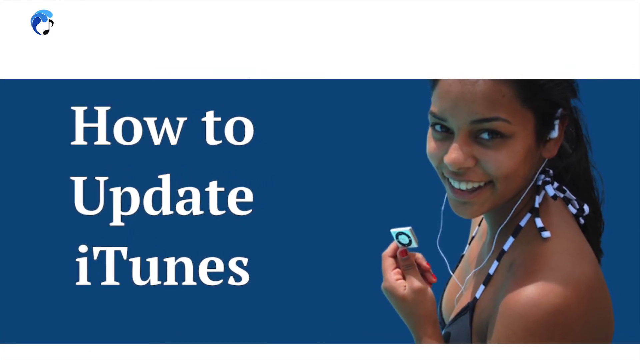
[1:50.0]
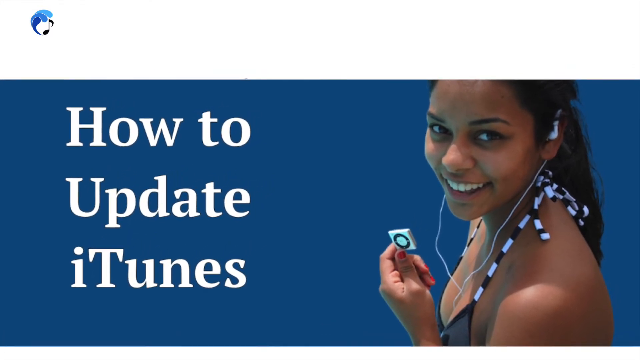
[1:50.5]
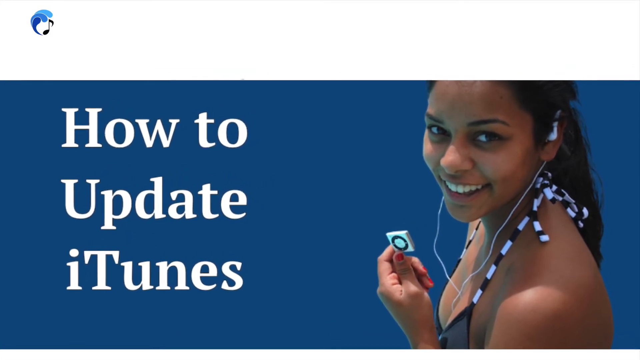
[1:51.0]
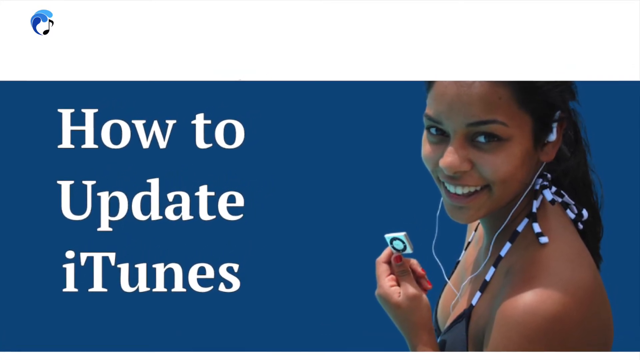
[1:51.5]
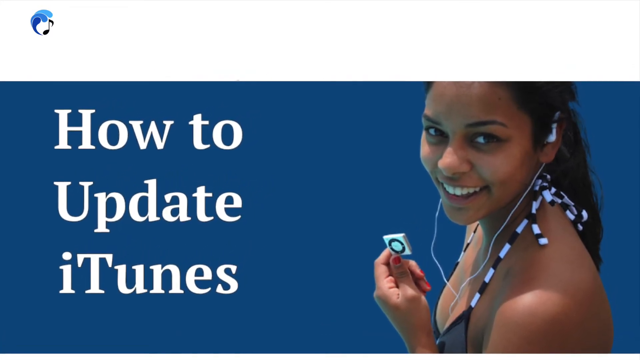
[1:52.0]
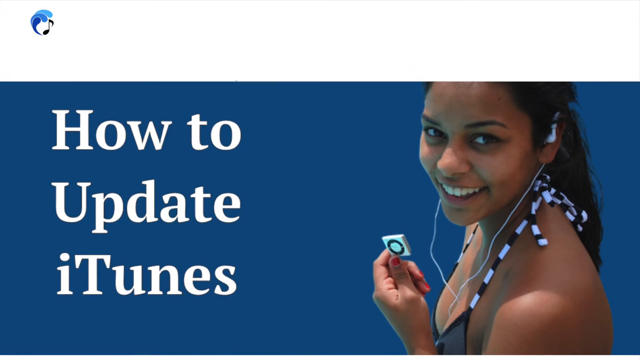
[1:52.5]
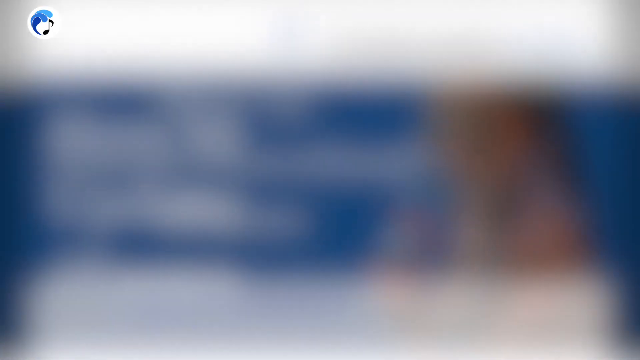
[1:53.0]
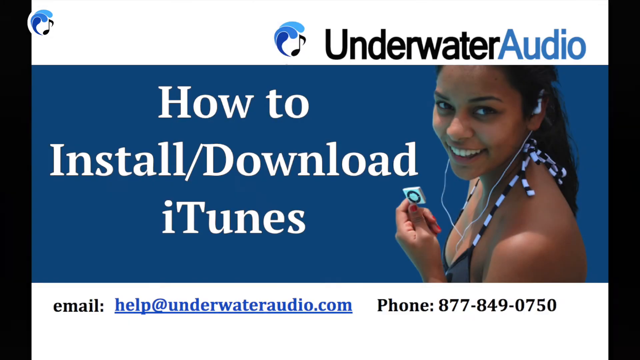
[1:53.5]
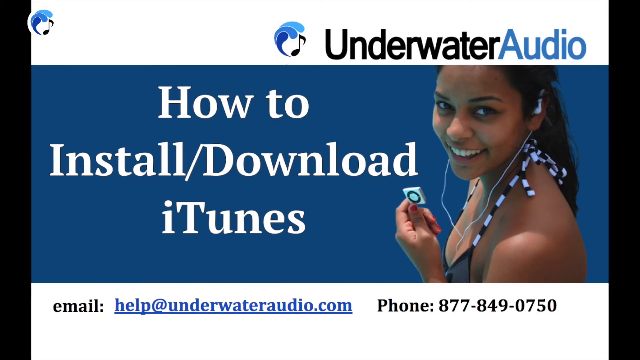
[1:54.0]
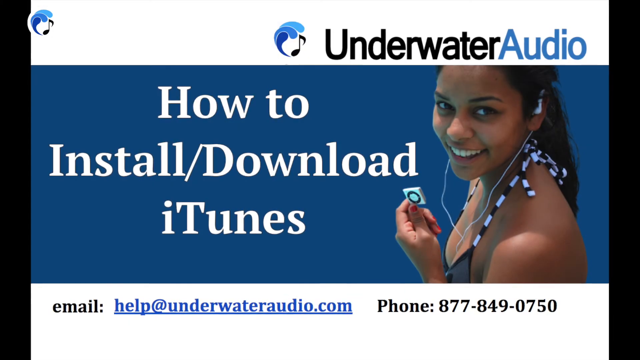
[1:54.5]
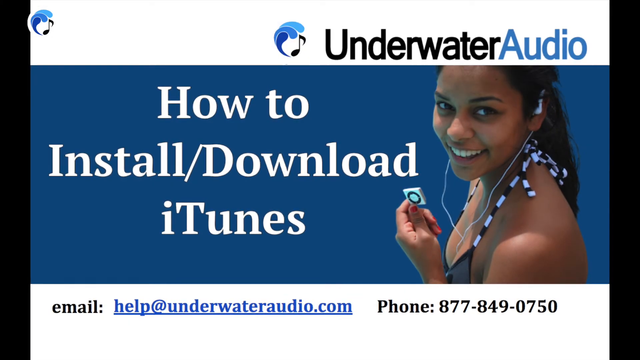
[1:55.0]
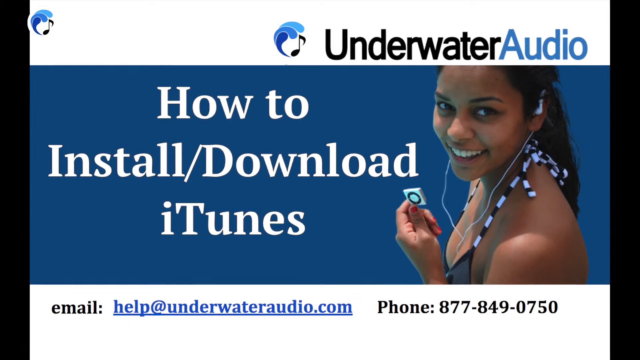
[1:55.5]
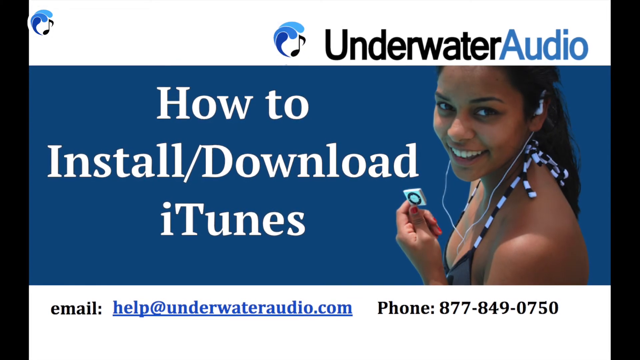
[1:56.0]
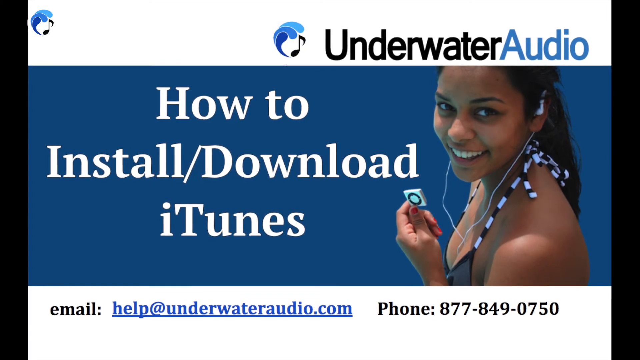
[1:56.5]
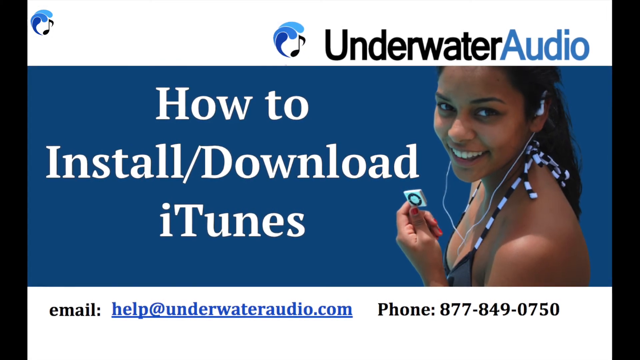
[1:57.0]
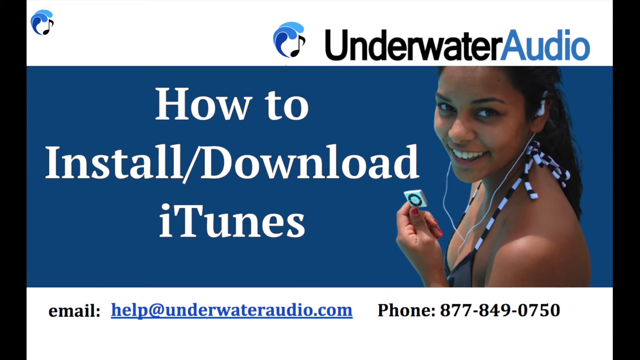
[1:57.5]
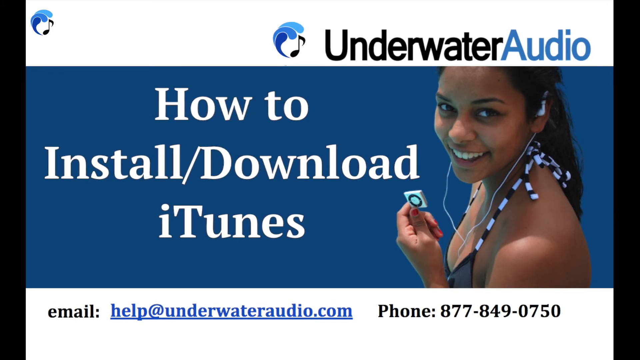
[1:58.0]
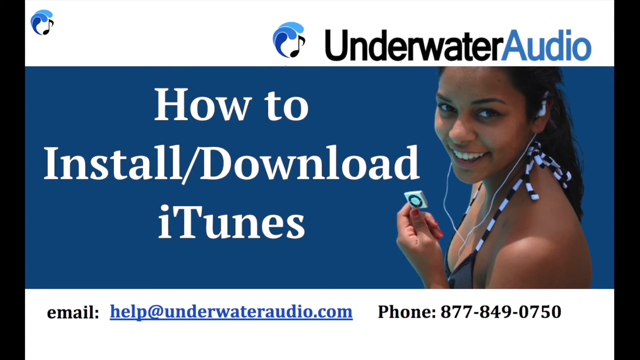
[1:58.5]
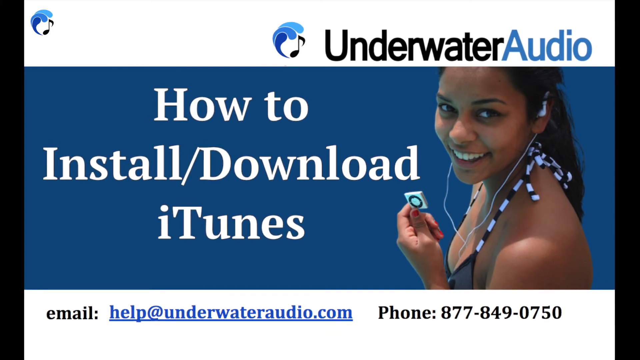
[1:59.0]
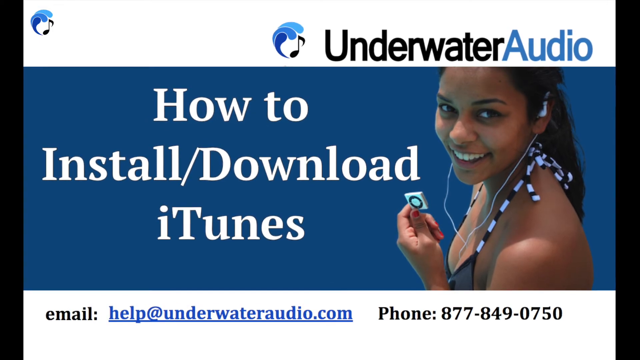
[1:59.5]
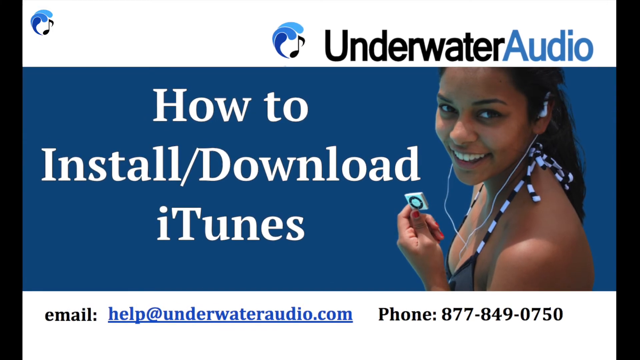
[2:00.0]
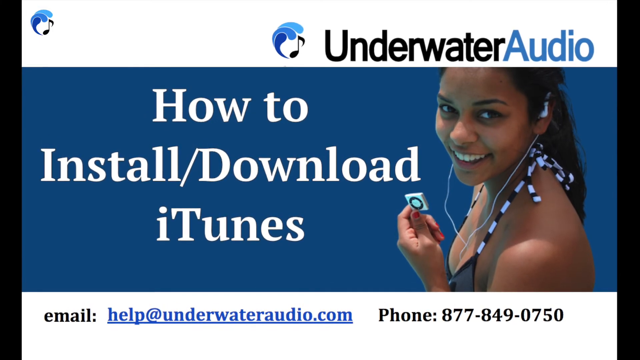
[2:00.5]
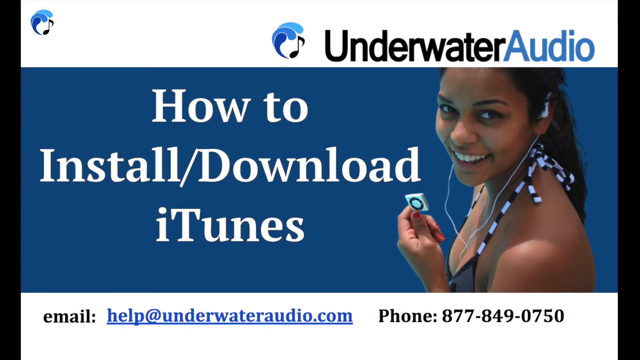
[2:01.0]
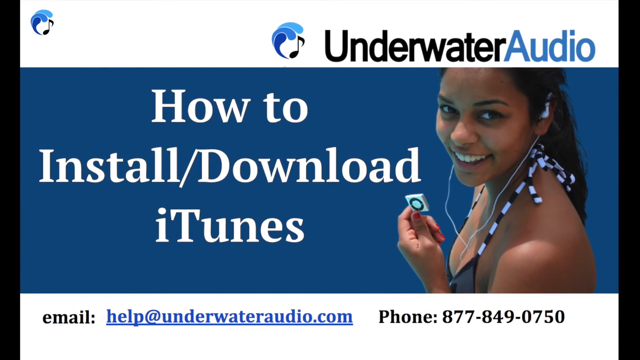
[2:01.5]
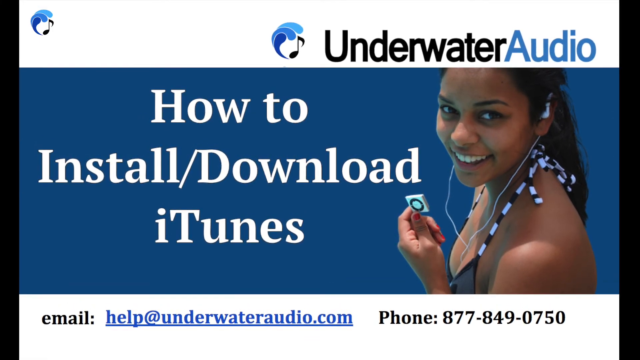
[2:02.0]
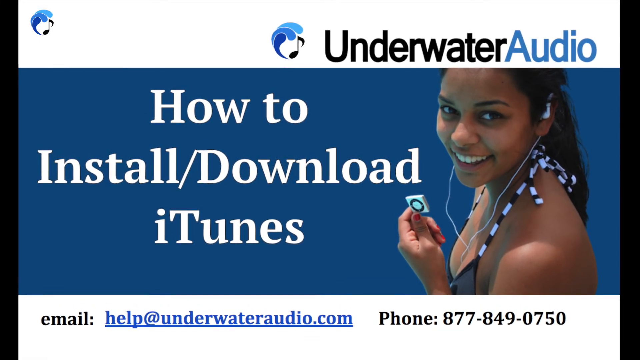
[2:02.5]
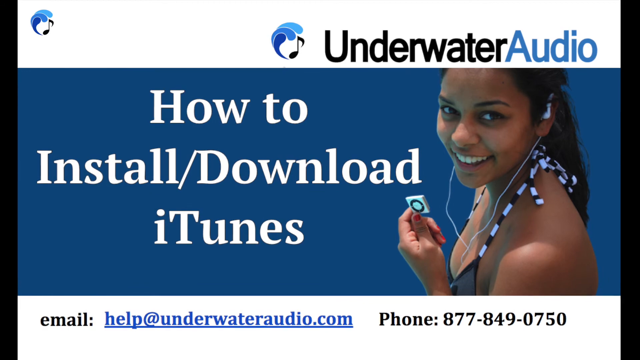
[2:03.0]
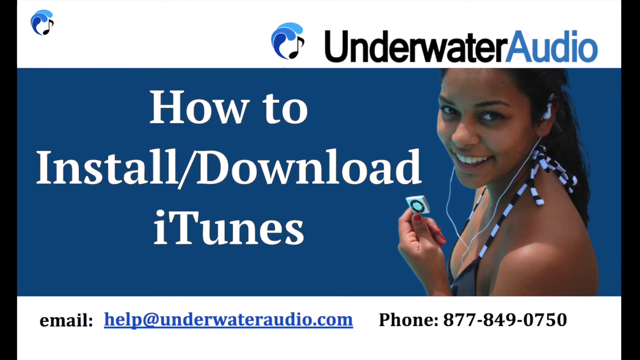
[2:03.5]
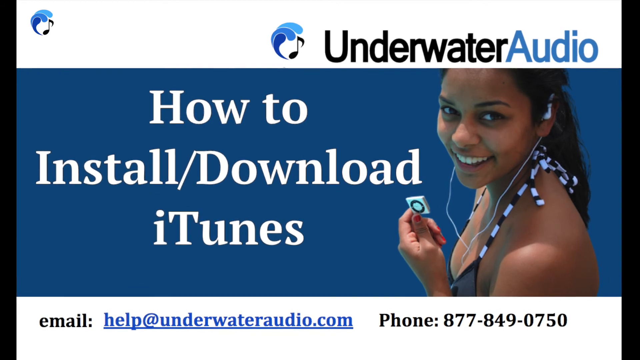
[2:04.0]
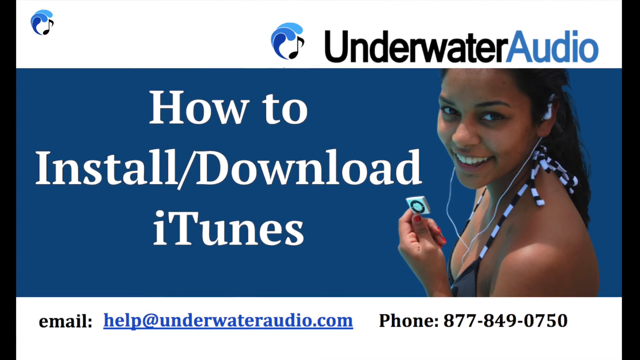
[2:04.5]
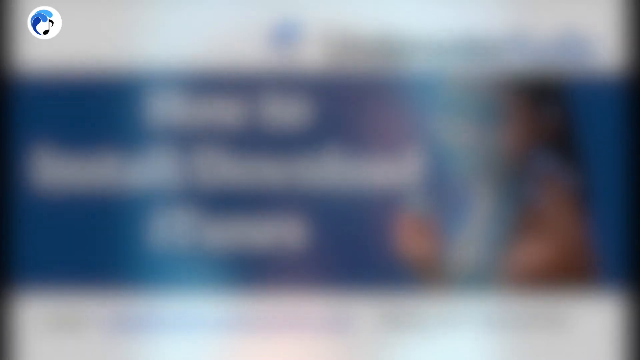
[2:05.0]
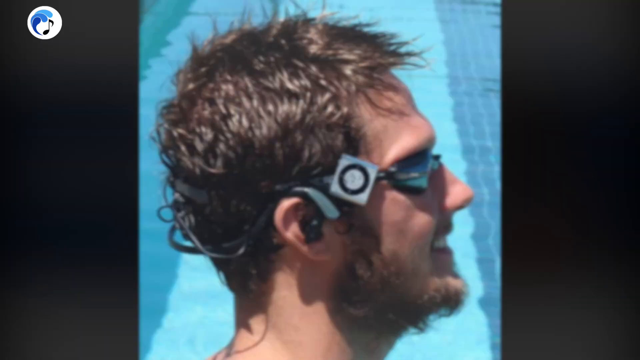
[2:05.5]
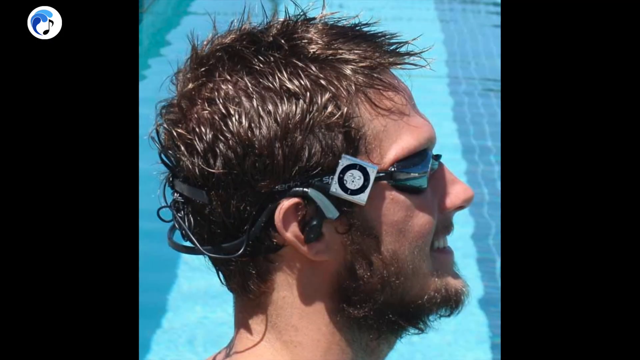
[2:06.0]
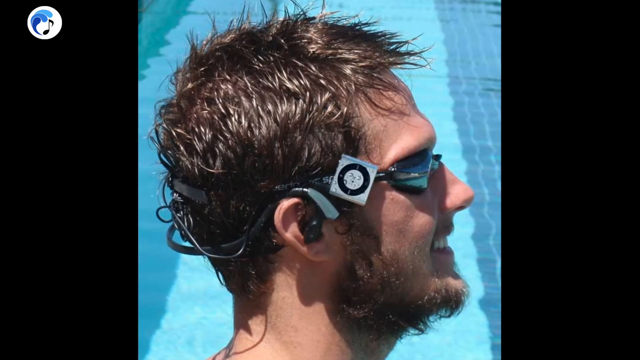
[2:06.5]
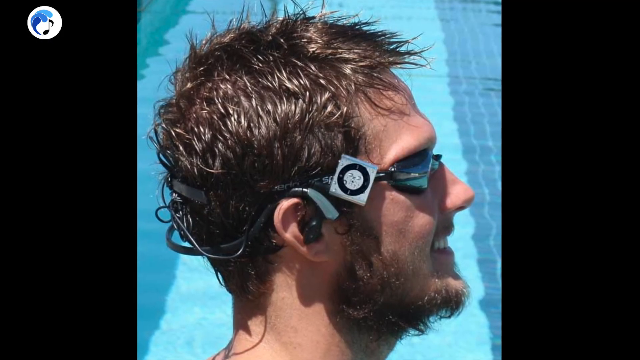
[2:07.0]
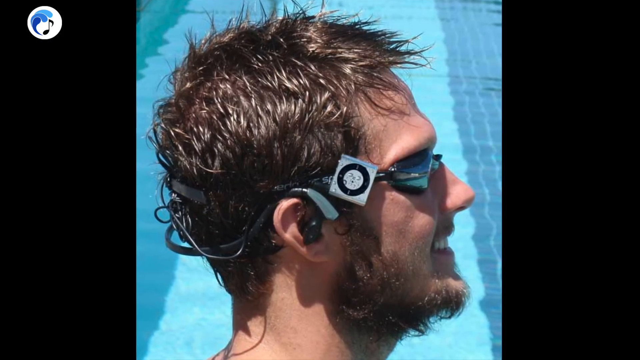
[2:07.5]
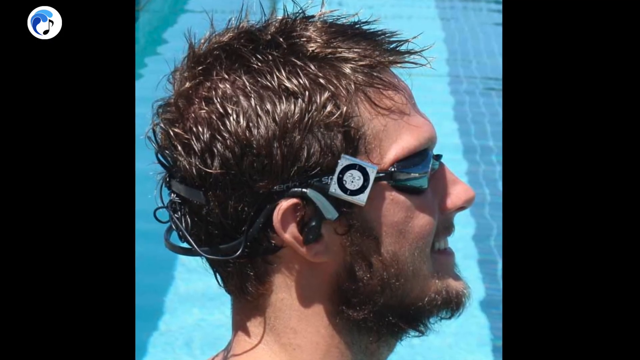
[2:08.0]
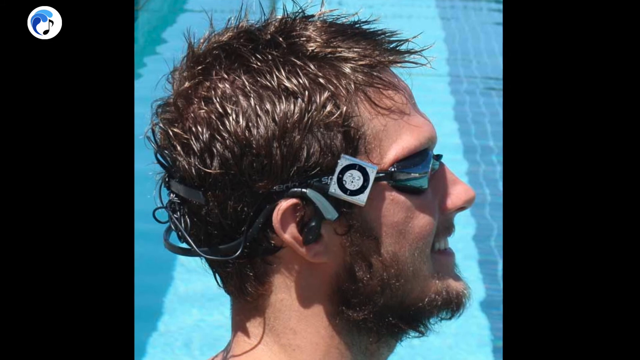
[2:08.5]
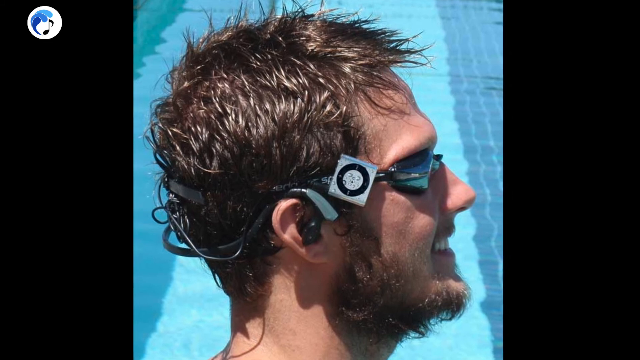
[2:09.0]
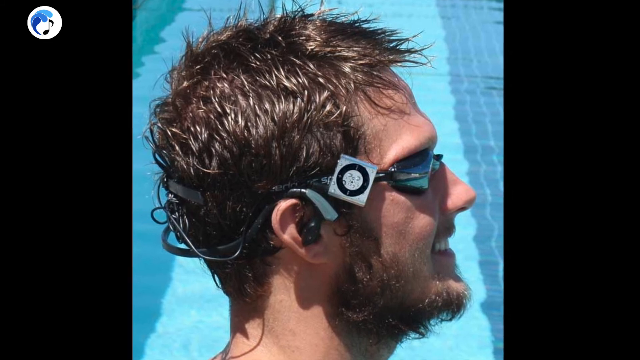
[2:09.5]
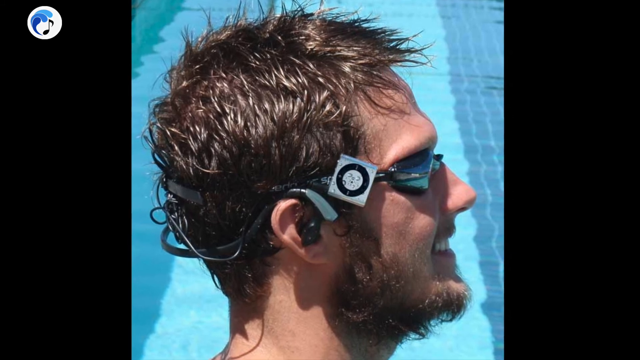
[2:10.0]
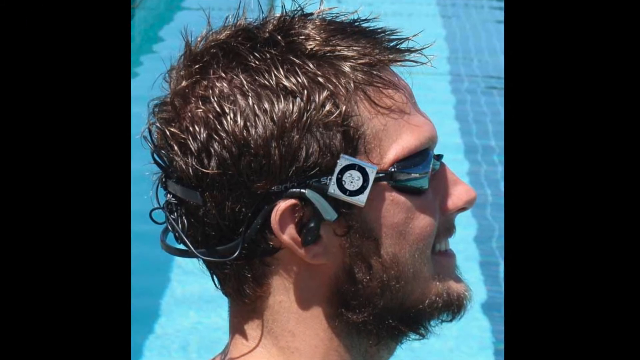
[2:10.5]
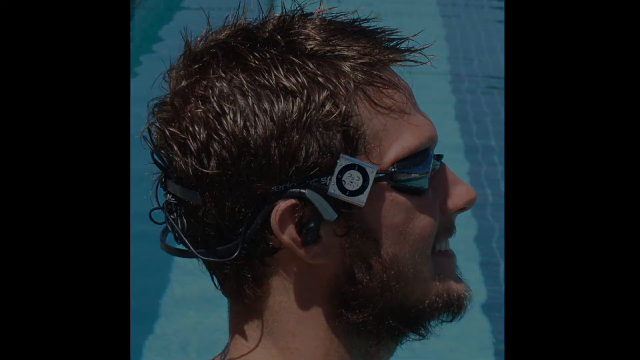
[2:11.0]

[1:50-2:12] The video returns to the blue screen with the woman holding the iPod shuffle, wearing wired headphones and a bathing suit, with blue behind her, and the view pans over it. The screen then switches back to the original screen with "underwater audio," "how to install or download iTunes," the email "help@underwateraudio.com" and the phone number. Next, a man with brown wet hair appears, seemingly in front of a pool. He has a brown, somewhat scraggly beard and wears swim goggles over his eyes with a strap going over the back of his head. A silver iPod shuffle appears to be affixed to the goggles, and there are water droplets, almost as if he has been swimming with them. It seems to be wired into the goggles so he can swim with it, with a piece going into his ear and wires running around his head. He is smiling and looks pretty happy.